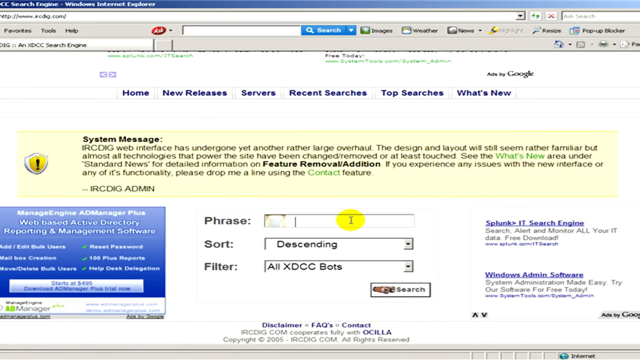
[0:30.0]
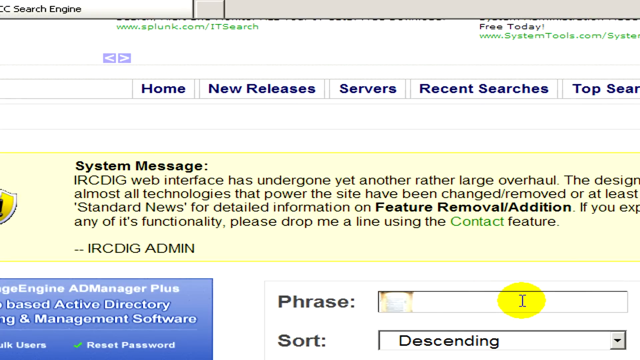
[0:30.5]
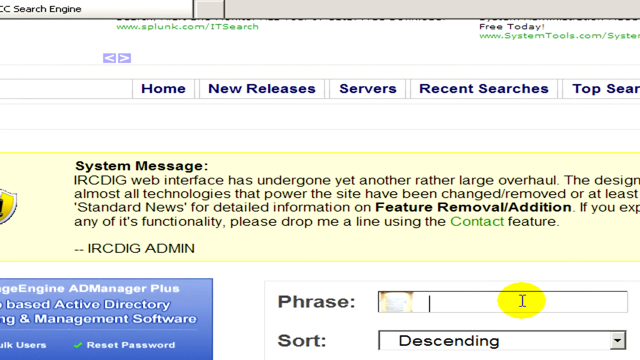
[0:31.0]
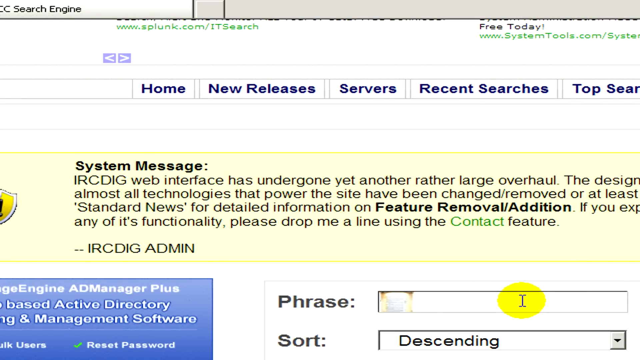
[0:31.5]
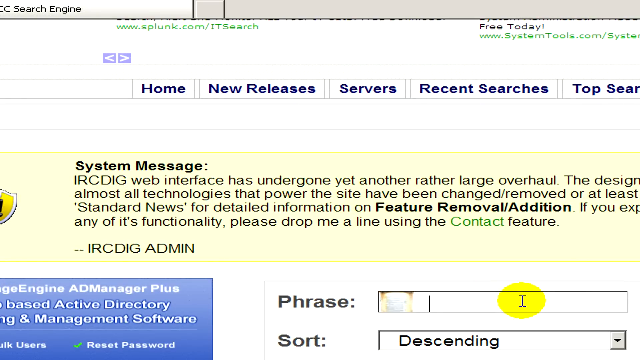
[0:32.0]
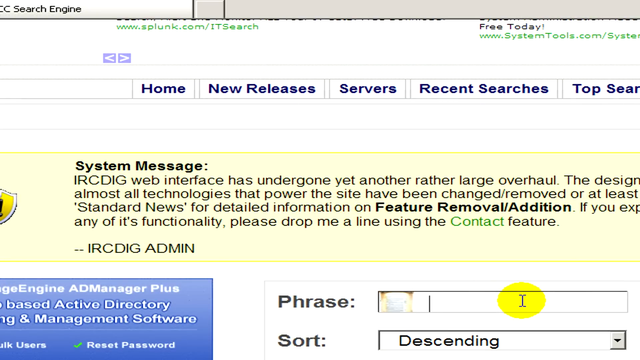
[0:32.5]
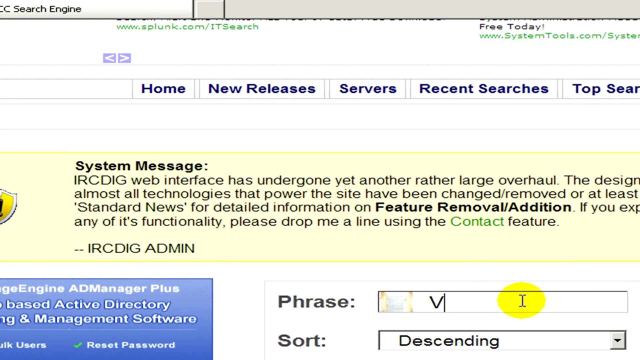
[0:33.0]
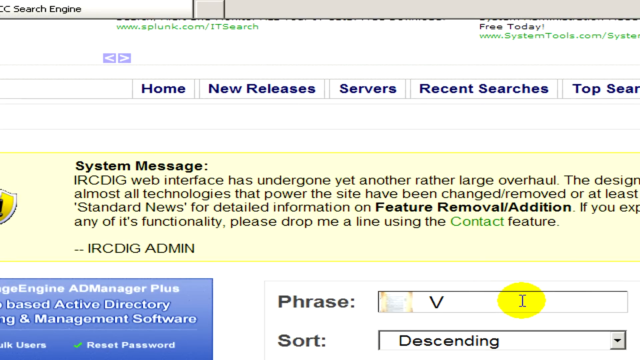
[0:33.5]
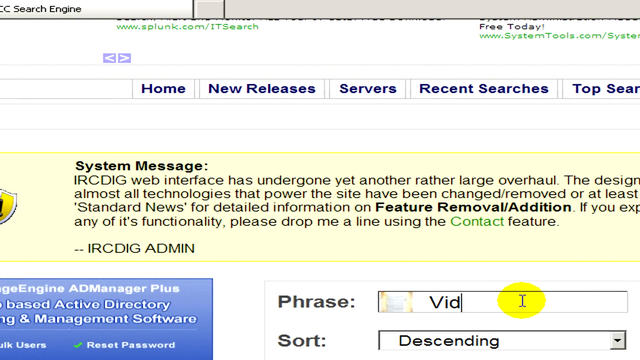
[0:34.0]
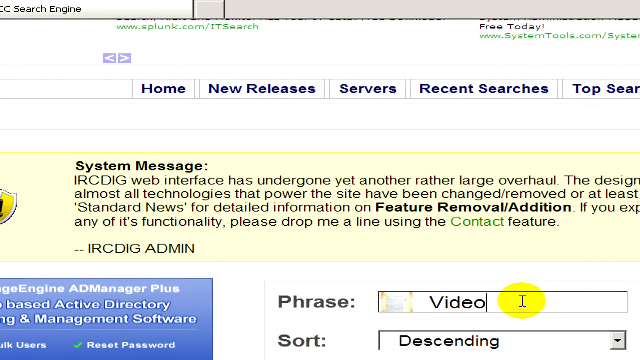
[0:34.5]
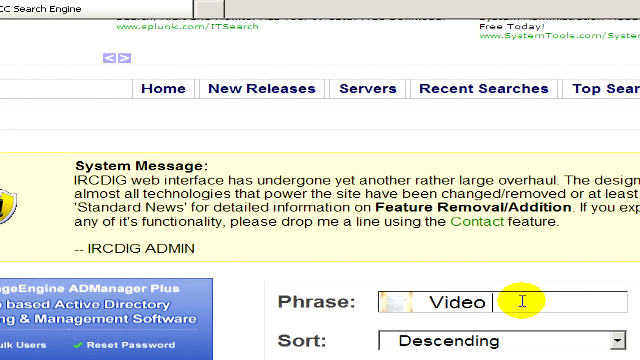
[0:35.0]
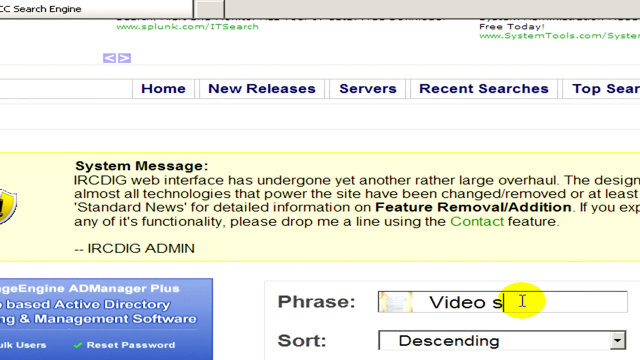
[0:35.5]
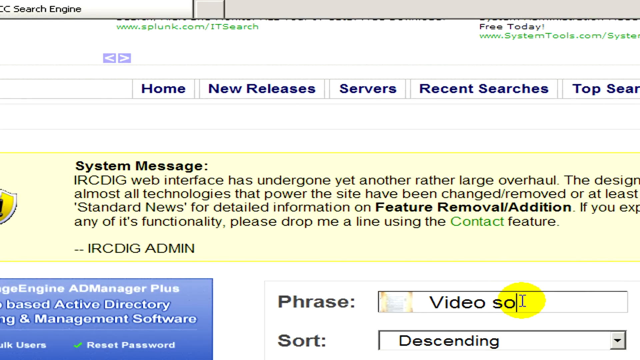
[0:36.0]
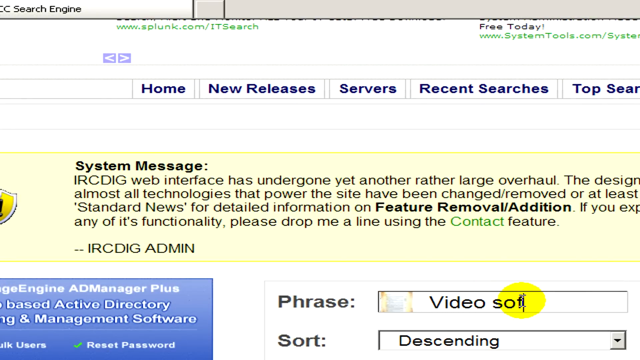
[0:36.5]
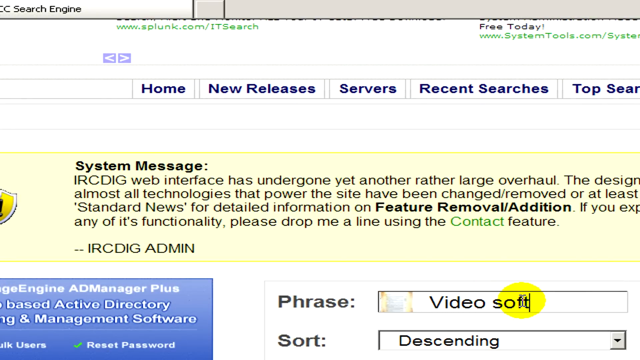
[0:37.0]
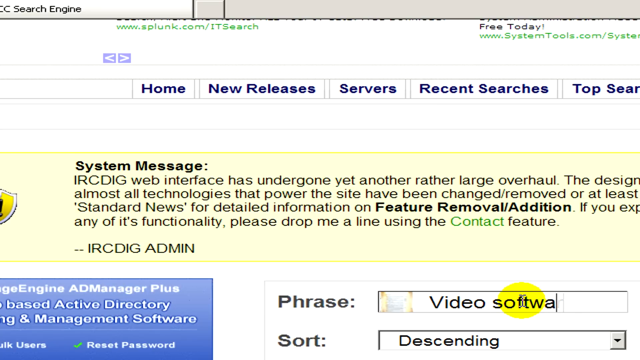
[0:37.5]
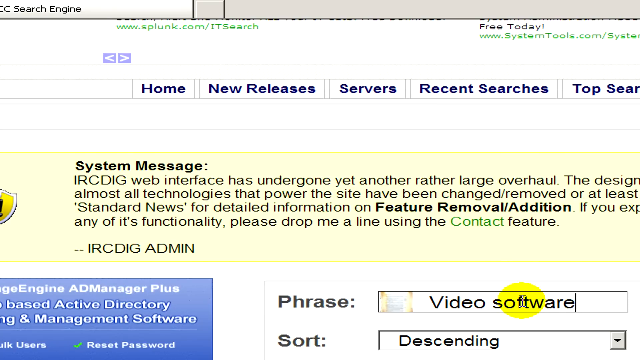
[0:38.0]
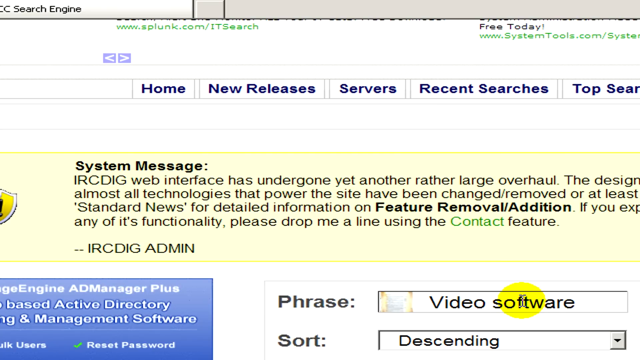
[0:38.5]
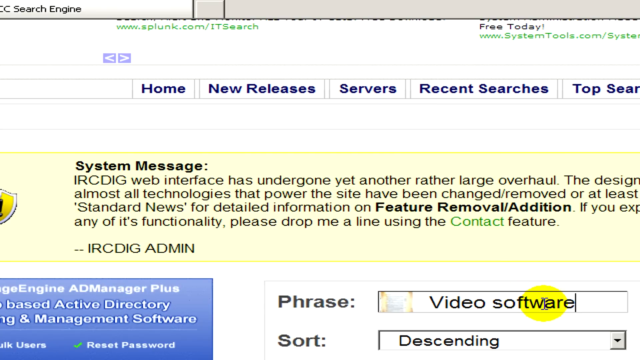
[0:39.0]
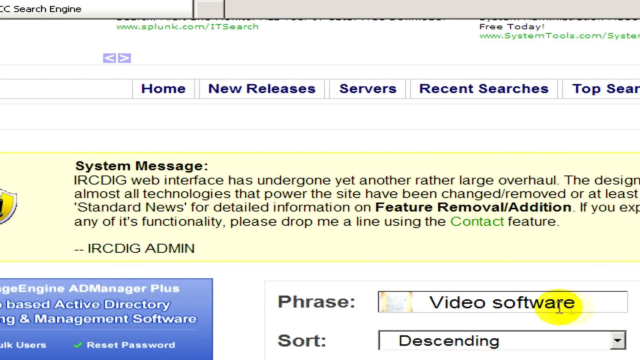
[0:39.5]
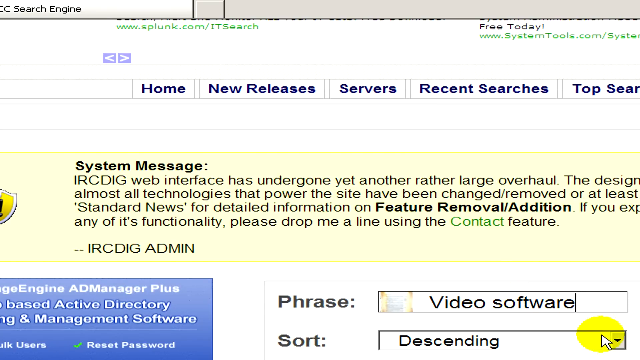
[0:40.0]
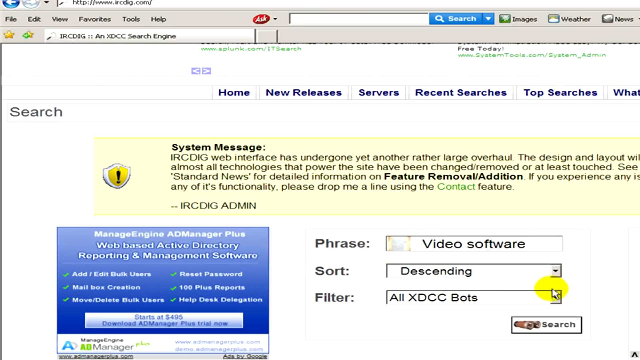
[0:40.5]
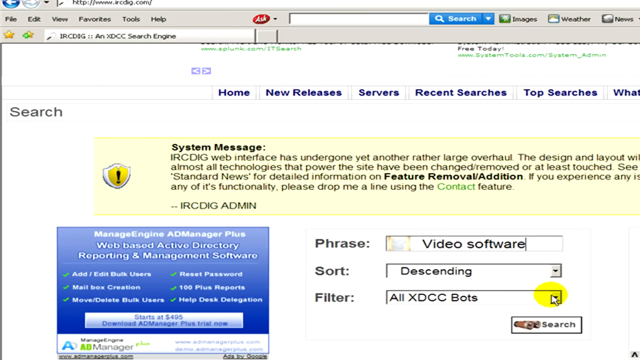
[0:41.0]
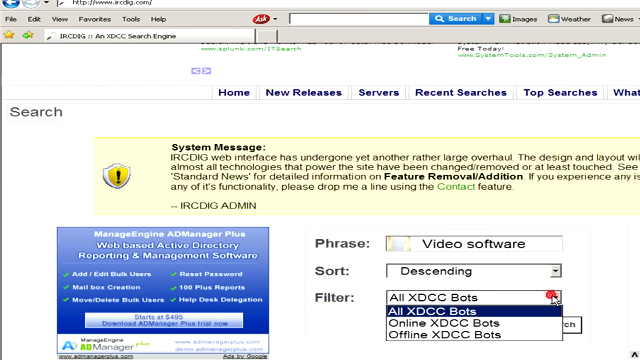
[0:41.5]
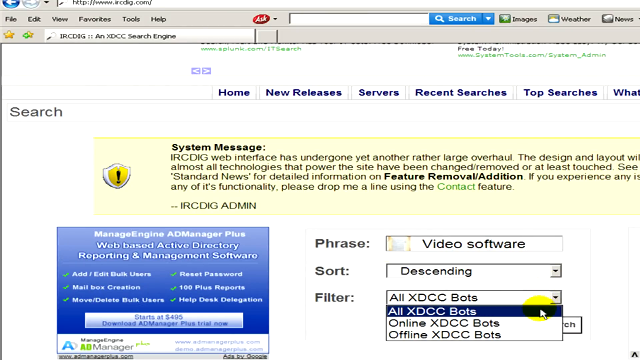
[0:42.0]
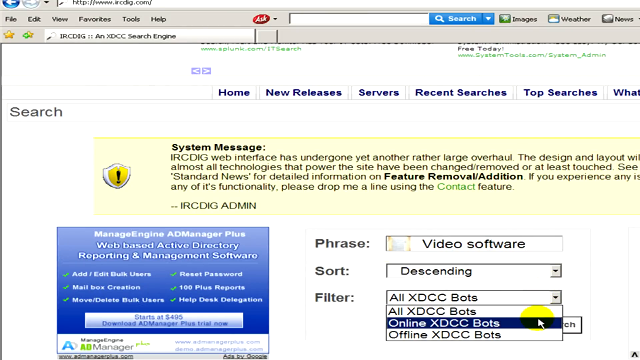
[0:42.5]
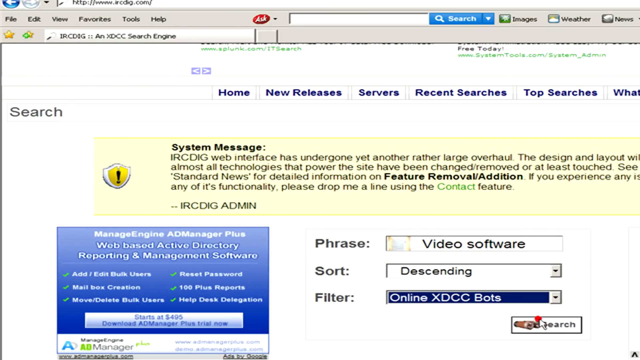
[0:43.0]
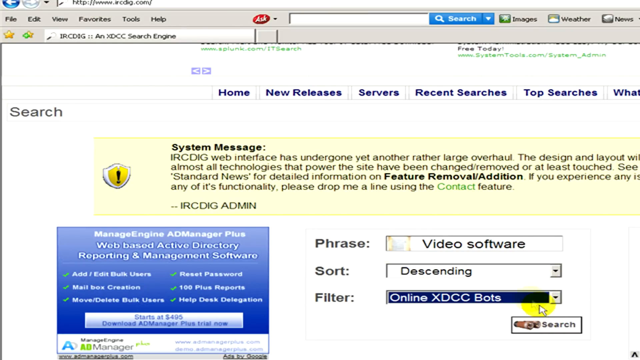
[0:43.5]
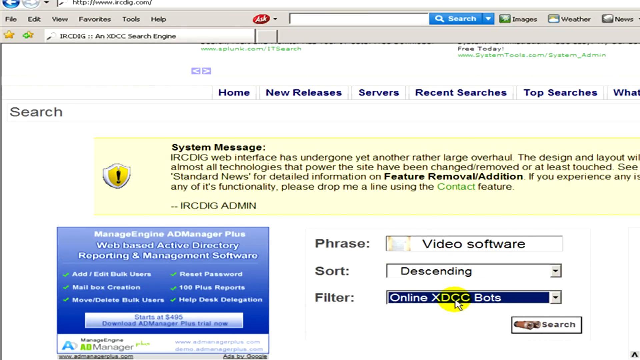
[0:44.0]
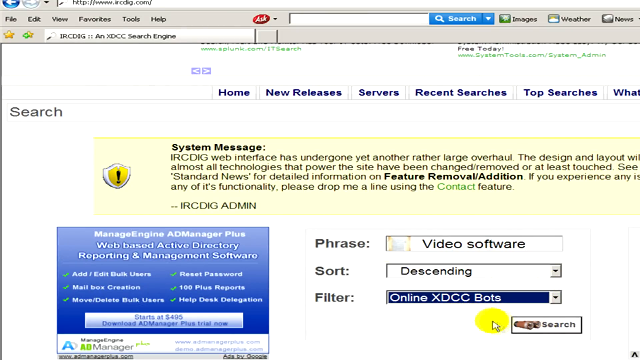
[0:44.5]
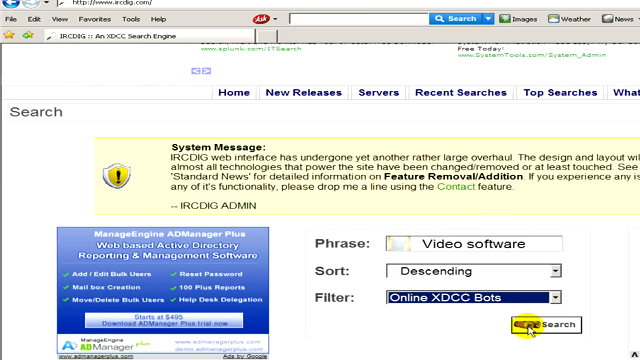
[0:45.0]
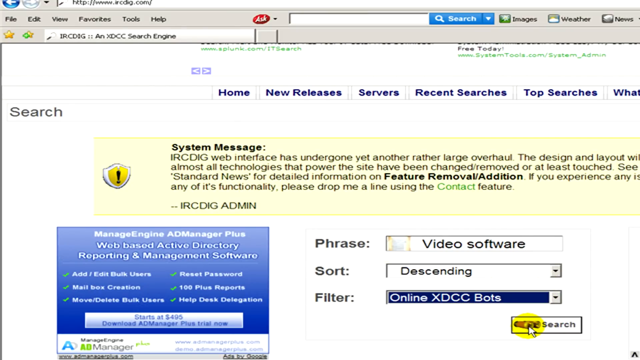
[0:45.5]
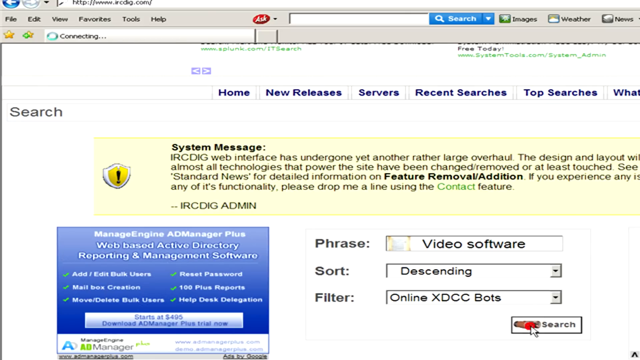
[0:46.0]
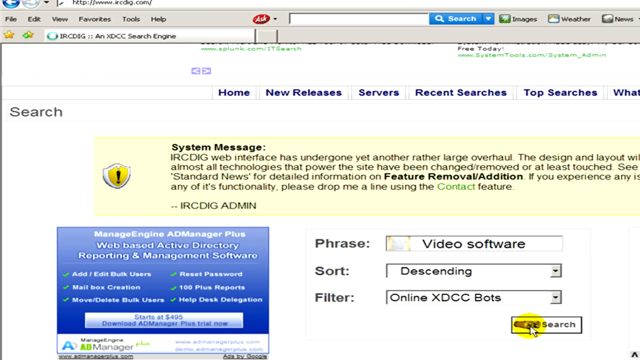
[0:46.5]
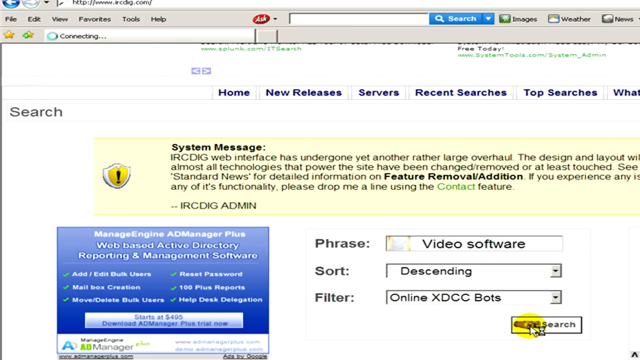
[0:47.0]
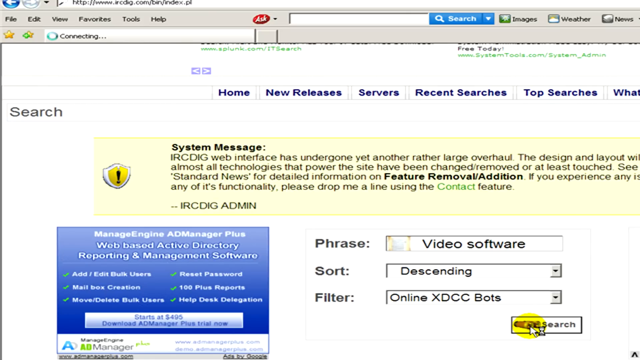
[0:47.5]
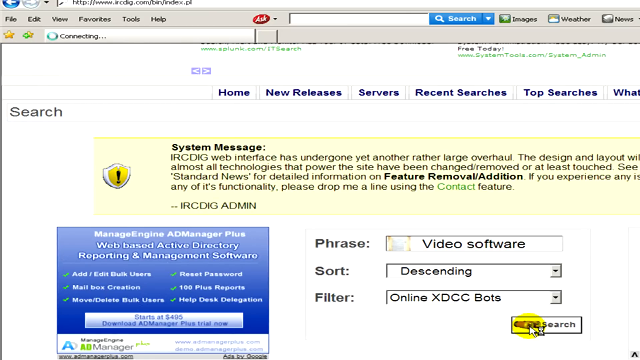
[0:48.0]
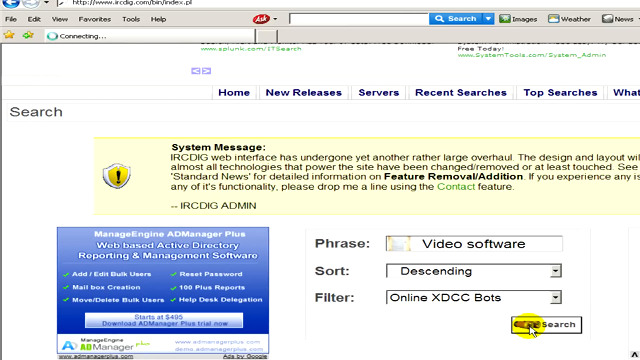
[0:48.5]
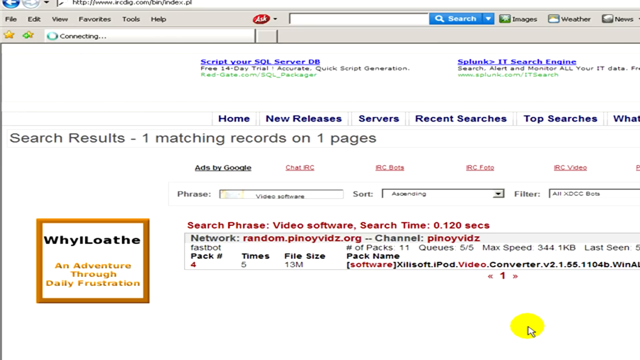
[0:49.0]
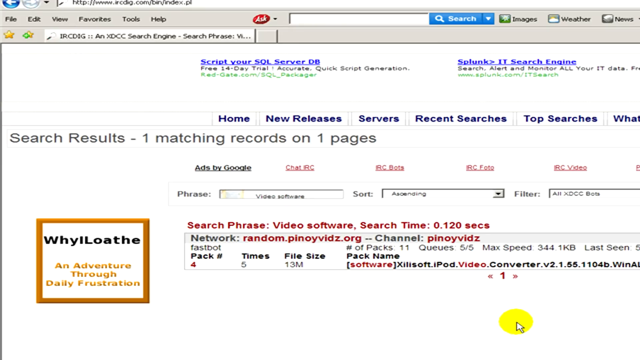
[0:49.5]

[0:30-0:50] On the IRCDIG web page, a bar at the top lists Home, New Releases, Servers, Recent Searches and Top Searches. The focus is on three search boxes in the center of the screen, labeled Phrase, Sort and Filters. In the Phrase box, "Video Software" is typed out letter by letter, and in the Filter box, "Online XDCC Bots" is selected. The Search button is then clicked, and the search results are shown very briefly. Just above the Phrase, Sort and Filter boxes is a large system message with a yellowish hue and an exclamation mark, briefly stating that the web interface has gone through a large overhaul.